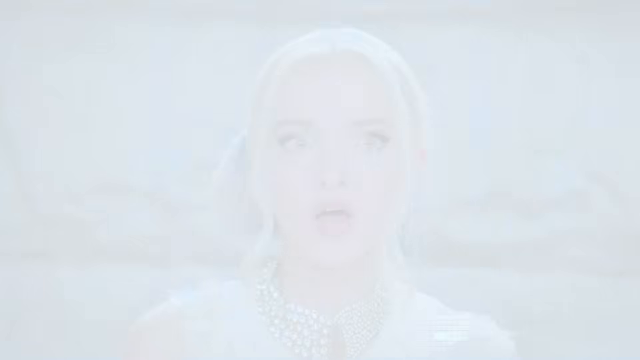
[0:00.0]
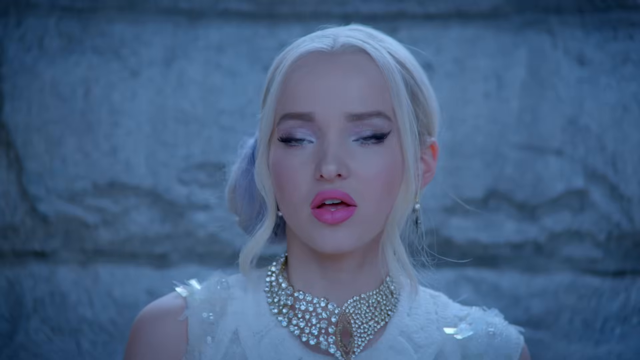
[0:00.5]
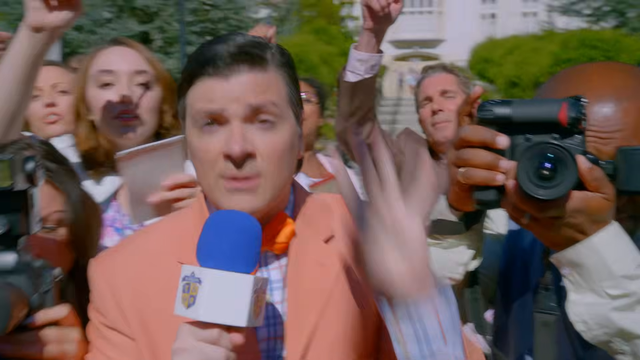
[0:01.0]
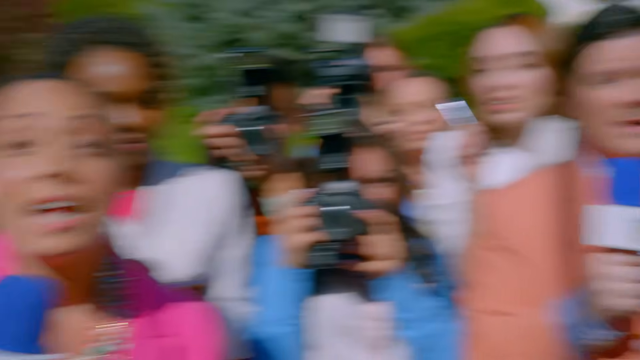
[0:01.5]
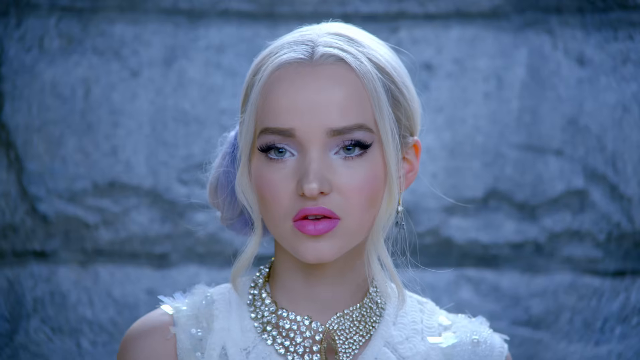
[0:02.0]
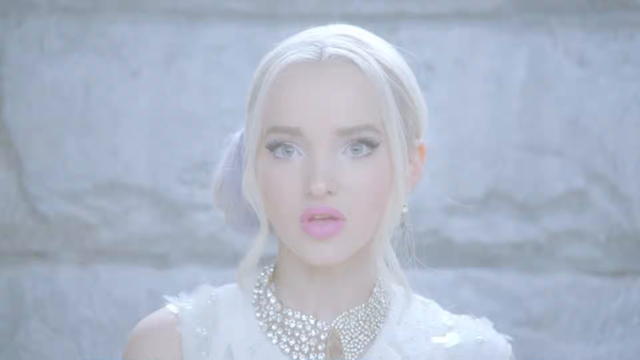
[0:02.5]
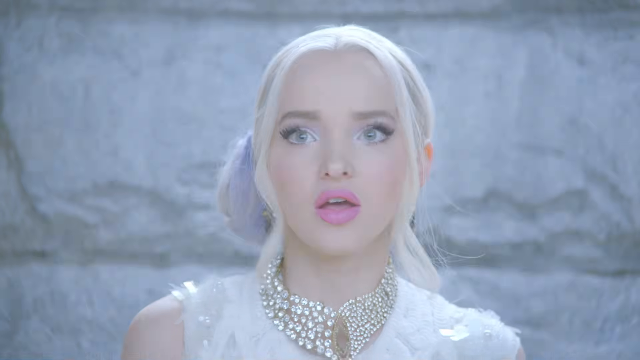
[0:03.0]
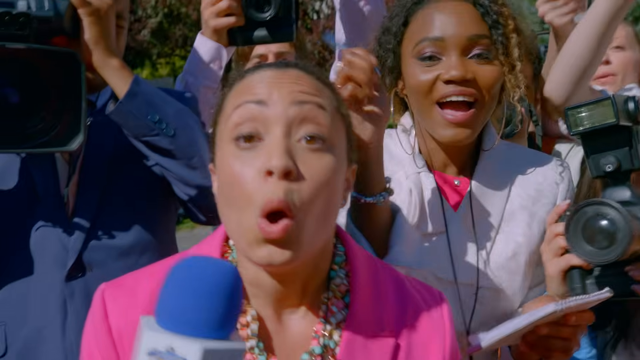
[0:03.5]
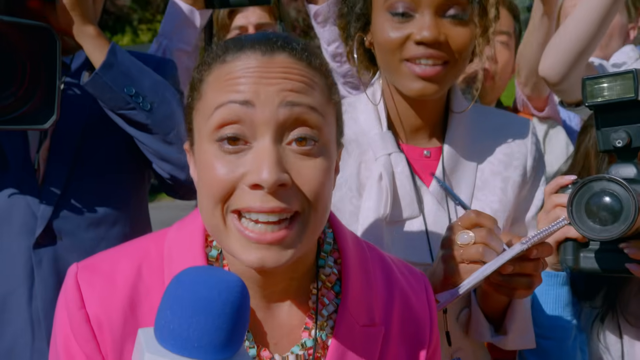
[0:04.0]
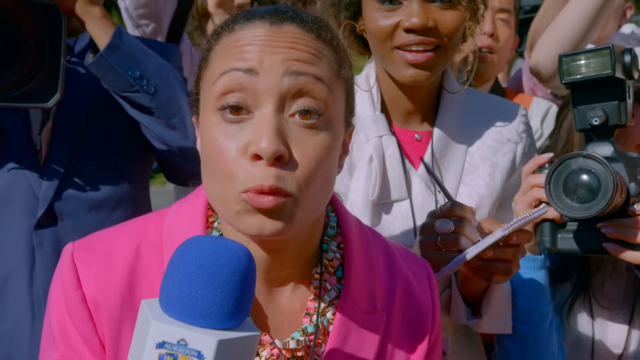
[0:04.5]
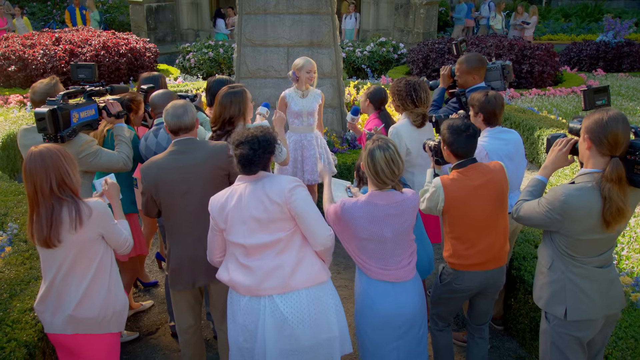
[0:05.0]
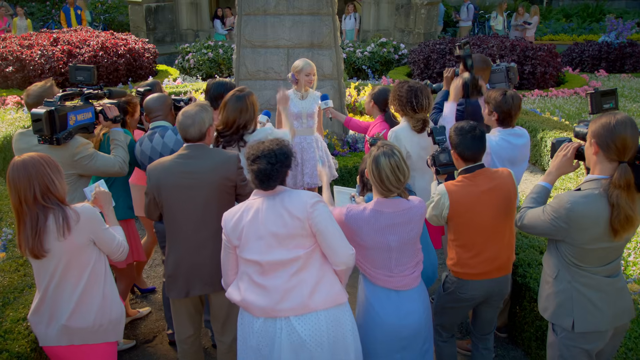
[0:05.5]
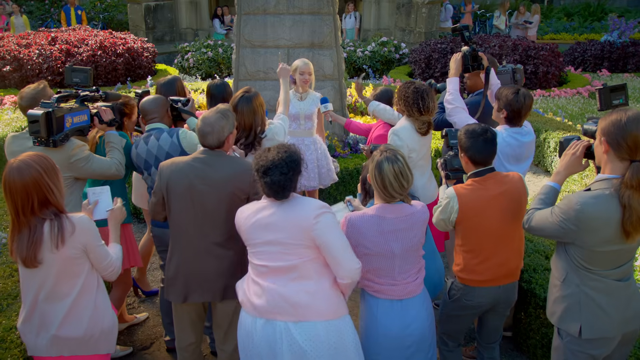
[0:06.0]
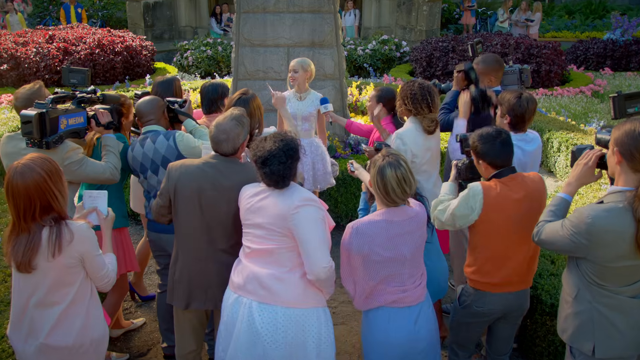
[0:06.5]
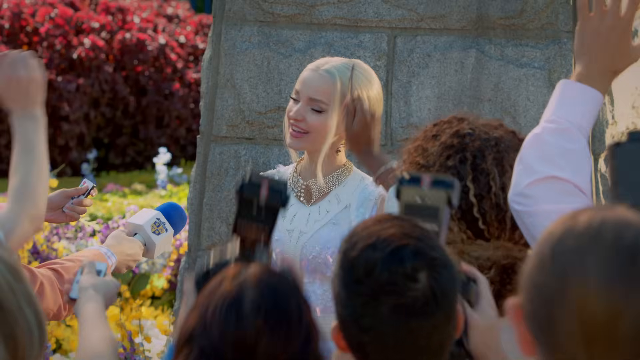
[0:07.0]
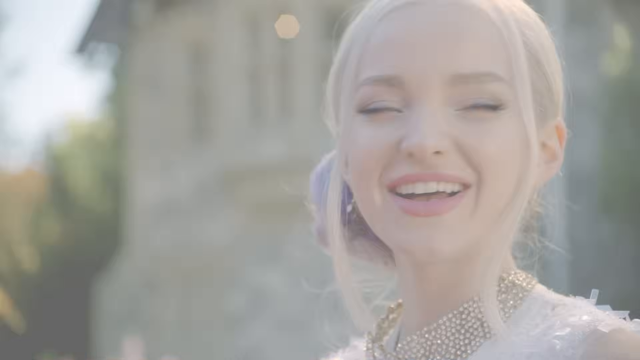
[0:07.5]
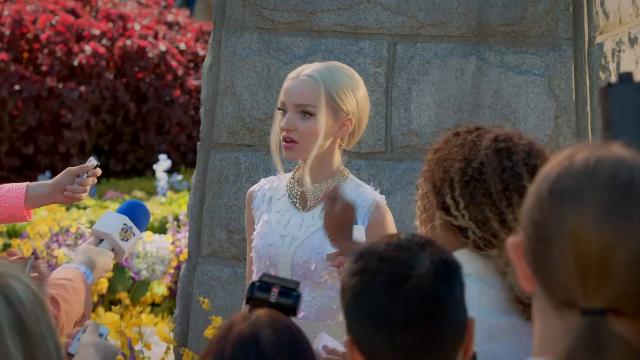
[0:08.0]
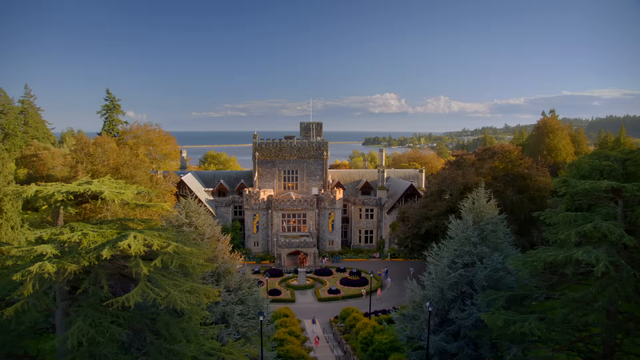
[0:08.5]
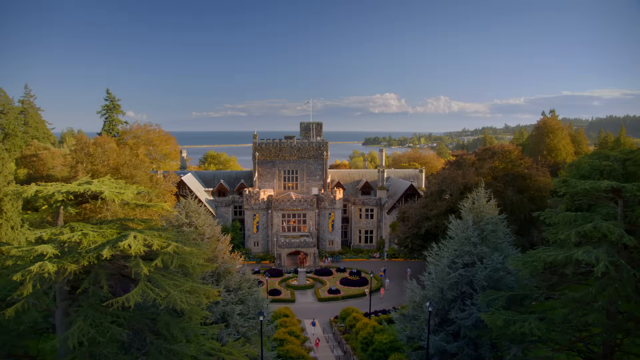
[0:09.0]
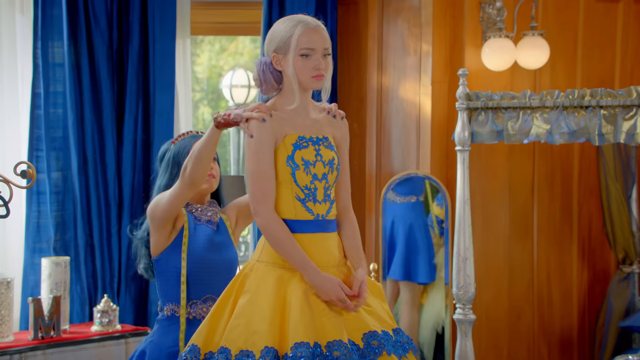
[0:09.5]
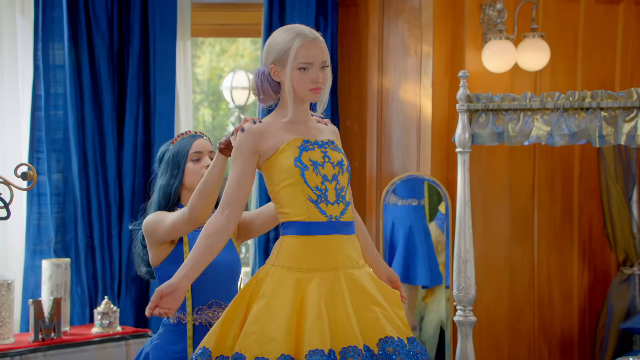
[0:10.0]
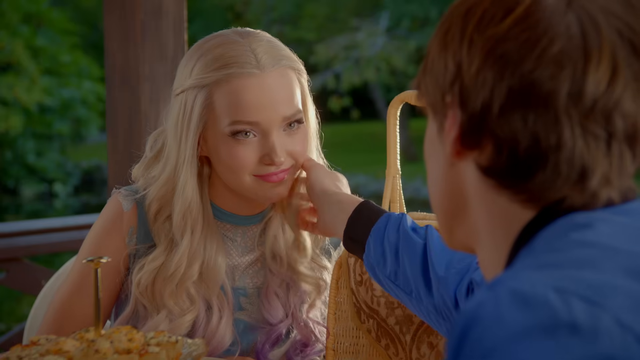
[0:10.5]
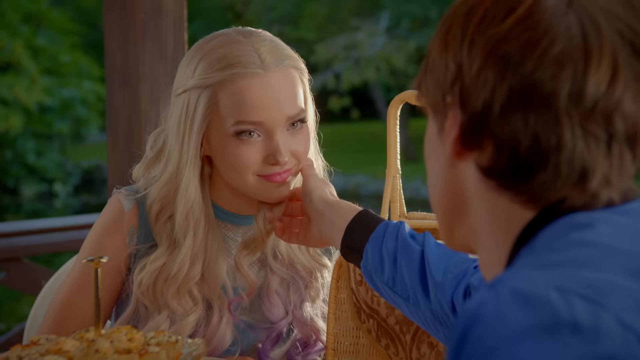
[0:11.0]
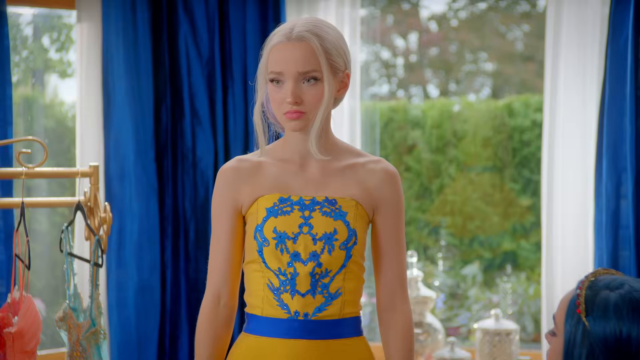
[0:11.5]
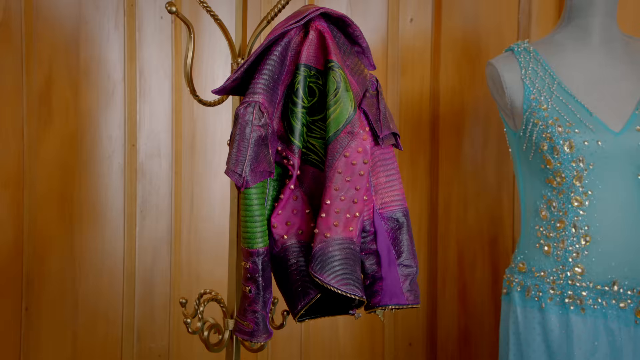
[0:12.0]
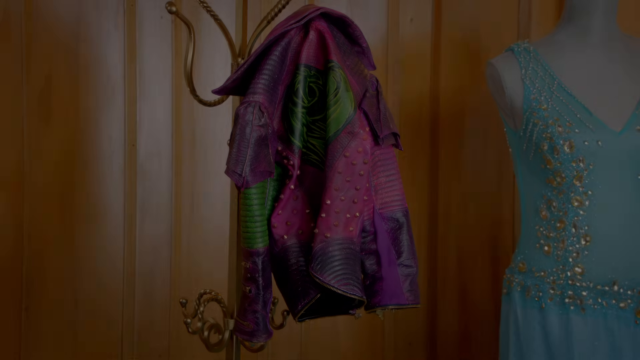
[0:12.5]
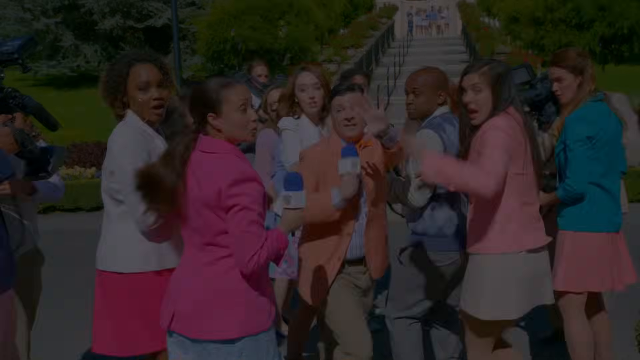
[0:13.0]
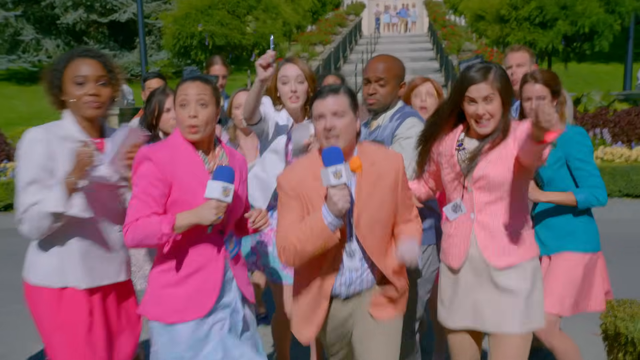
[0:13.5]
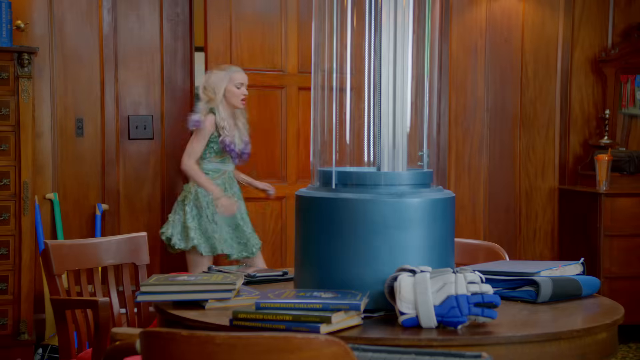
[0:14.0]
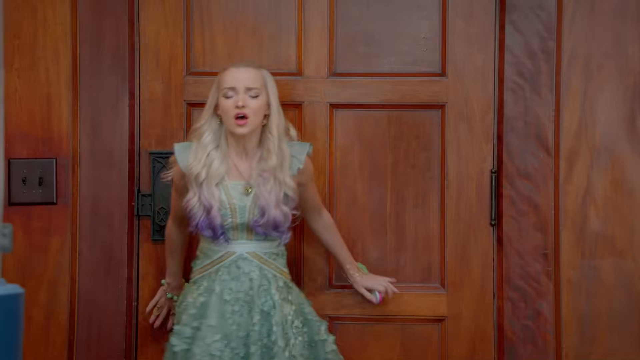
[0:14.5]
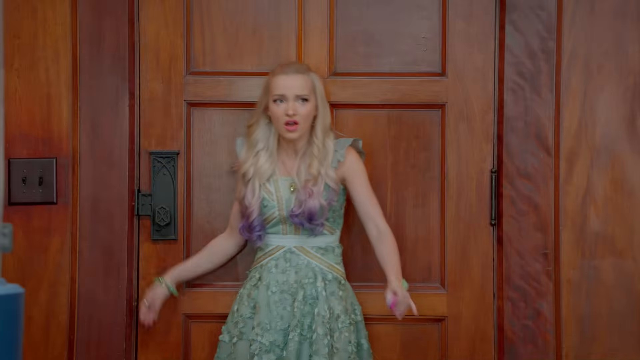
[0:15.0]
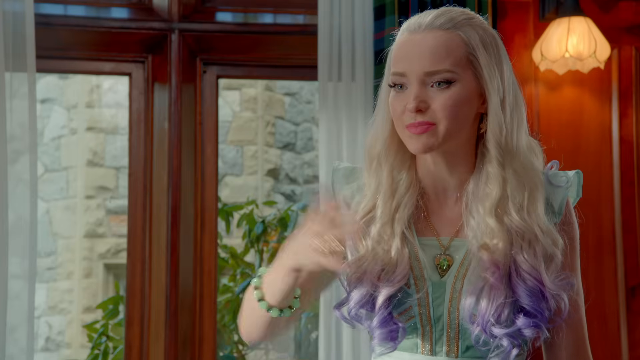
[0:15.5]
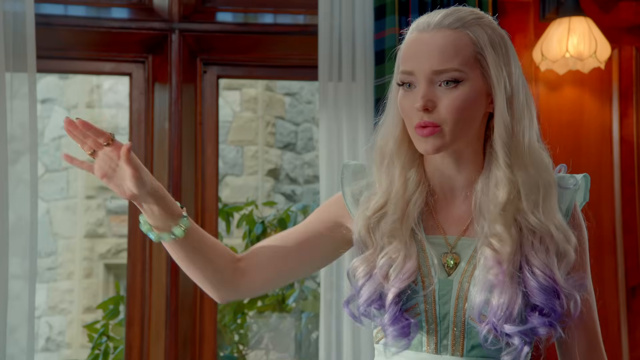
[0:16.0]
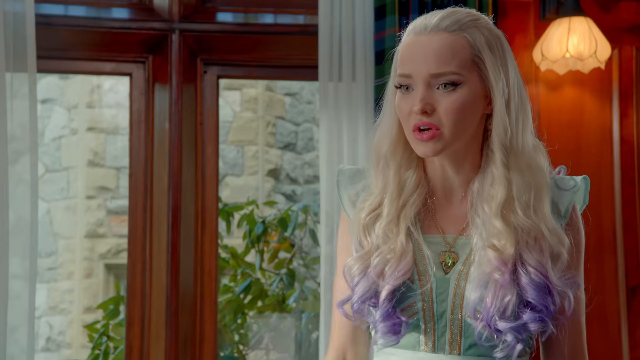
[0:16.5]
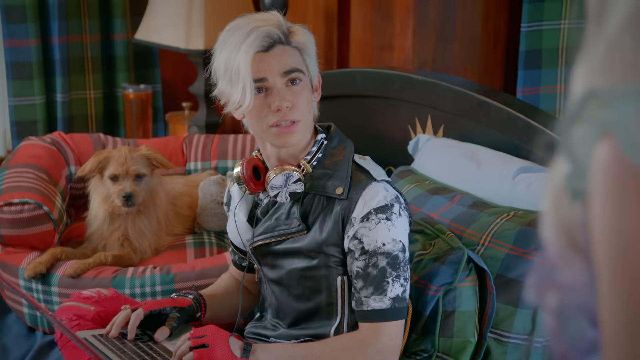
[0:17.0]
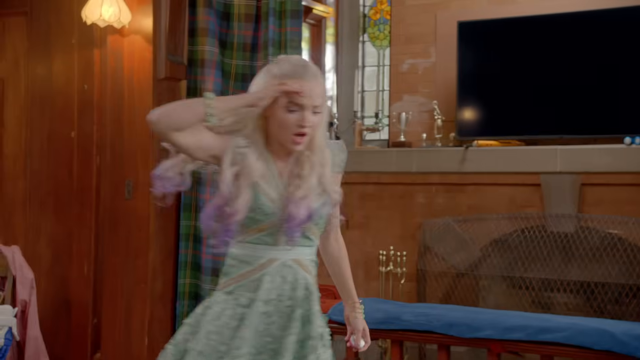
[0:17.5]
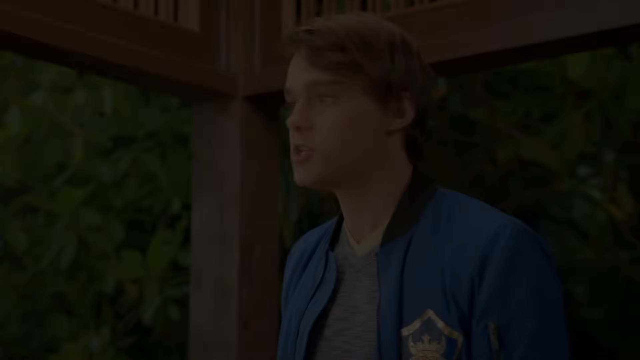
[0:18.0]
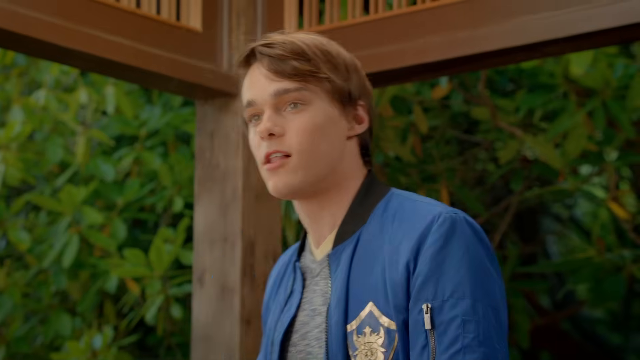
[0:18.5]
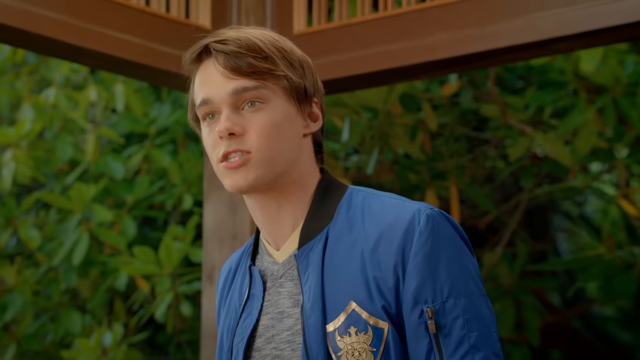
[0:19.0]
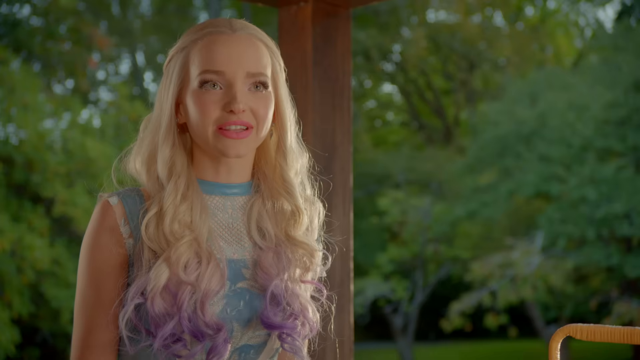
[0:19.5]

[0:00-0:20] A young woman with blonde hair appears on a screen, wearing what looks like a white shirt, with diamonds around her neck. She looks almost startled. Paparazzi appear, all looking as though they want to ask her questions and take pictures. She seems to be standing in some type of garden, and there does not seem to be a way out. Next she is in a room where she appears to be fitted for a dress and told how to stand and pose. She is then with what looks possibly to be a boyfriend, and then she is chased by the paparazzi and seems overwhelmed.